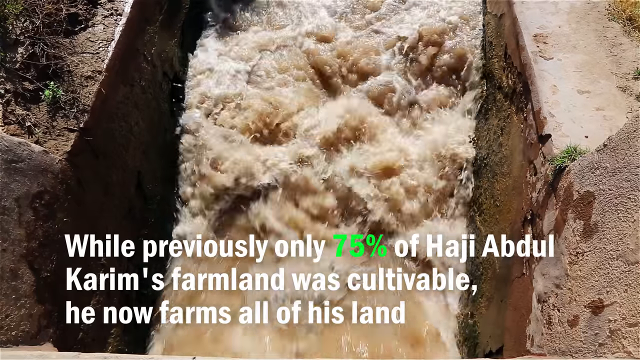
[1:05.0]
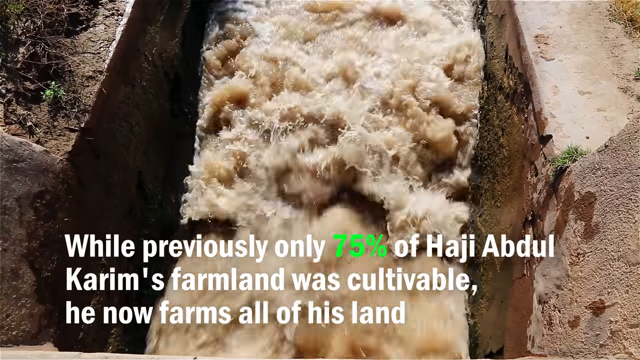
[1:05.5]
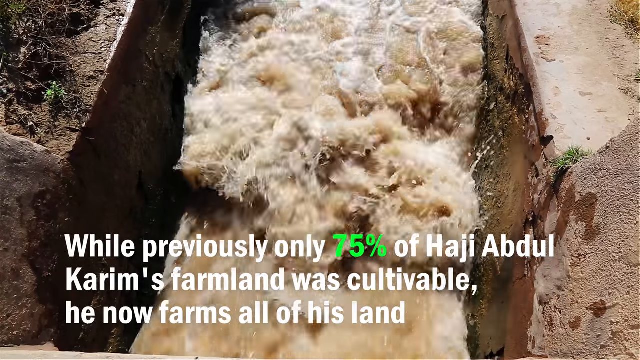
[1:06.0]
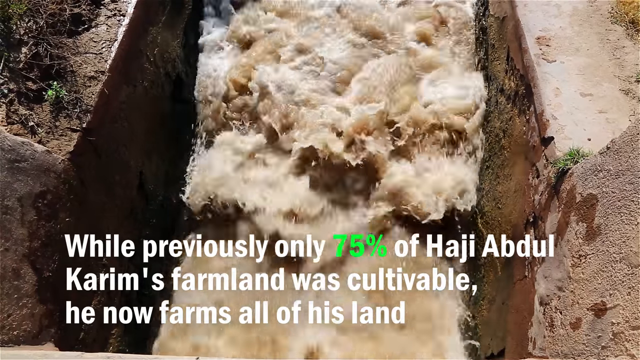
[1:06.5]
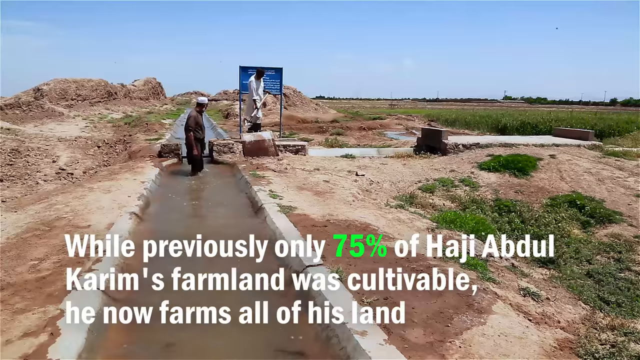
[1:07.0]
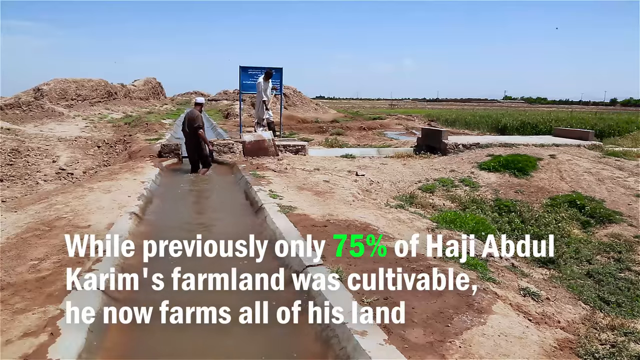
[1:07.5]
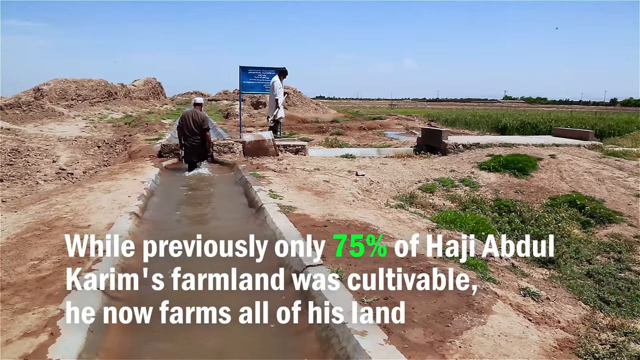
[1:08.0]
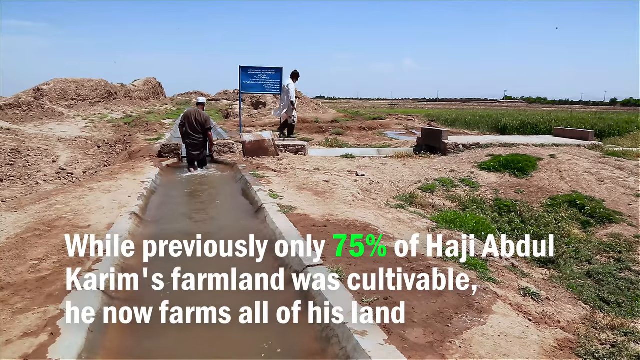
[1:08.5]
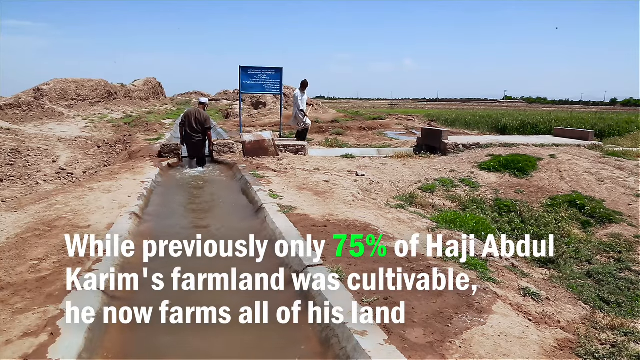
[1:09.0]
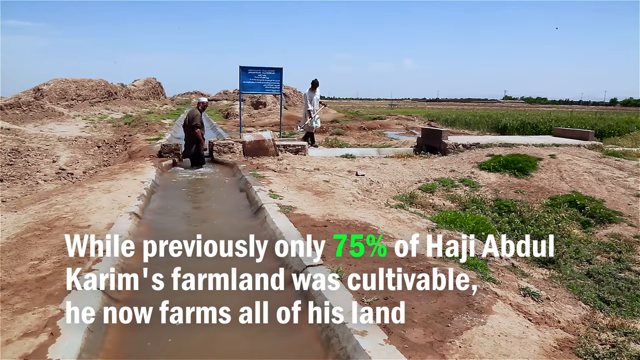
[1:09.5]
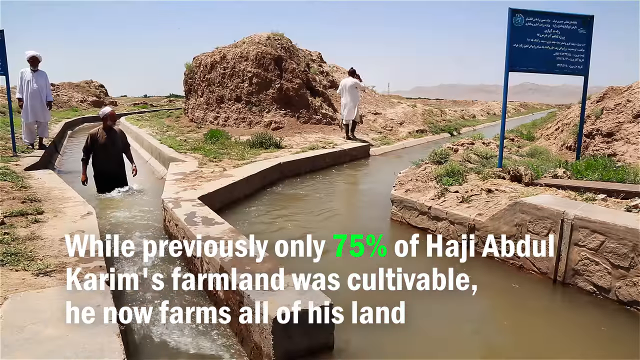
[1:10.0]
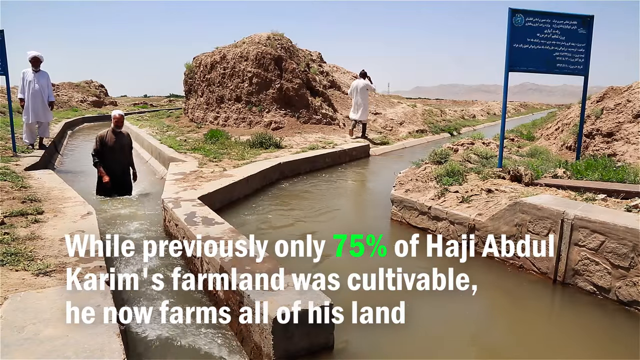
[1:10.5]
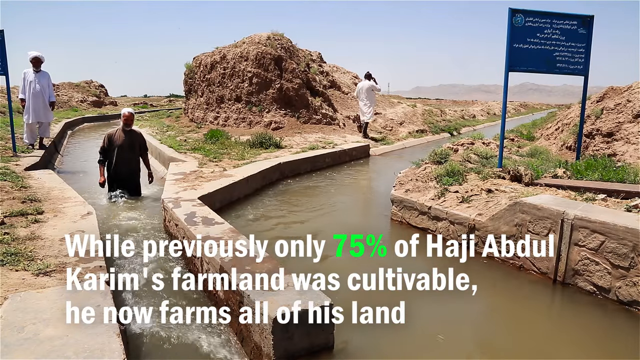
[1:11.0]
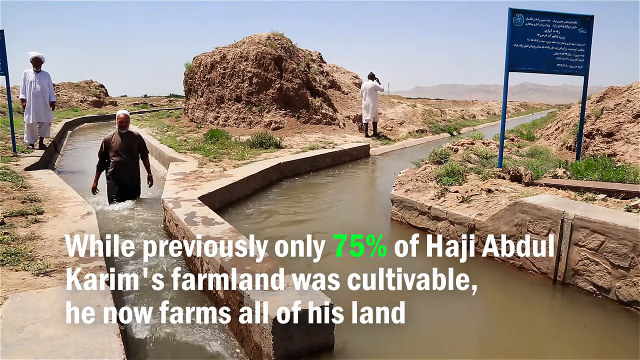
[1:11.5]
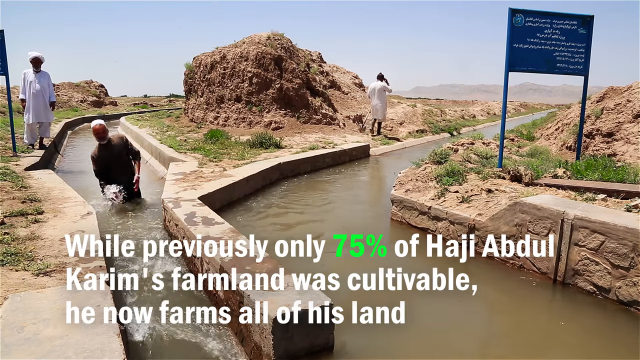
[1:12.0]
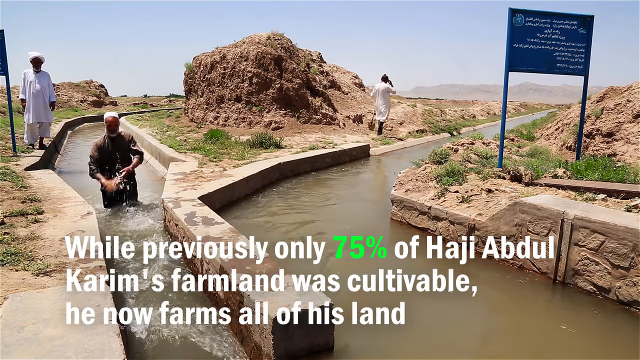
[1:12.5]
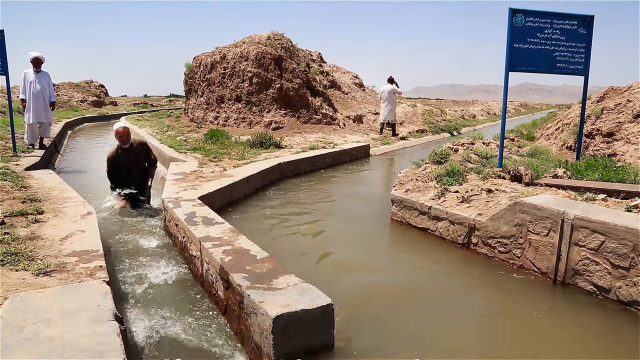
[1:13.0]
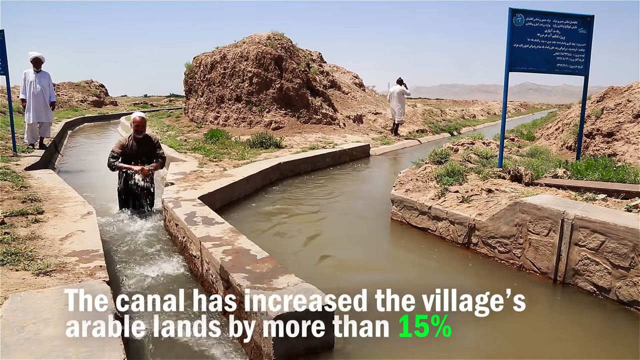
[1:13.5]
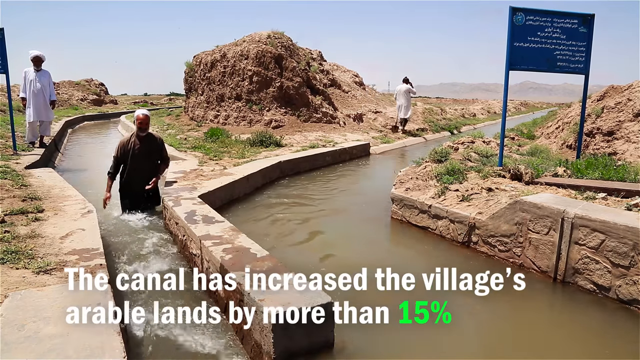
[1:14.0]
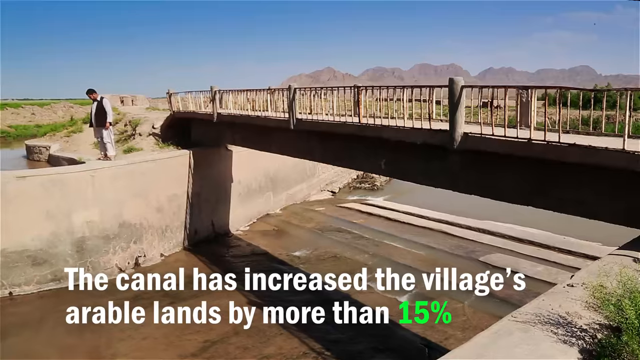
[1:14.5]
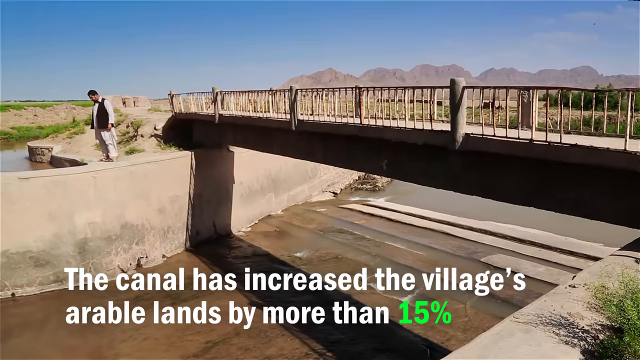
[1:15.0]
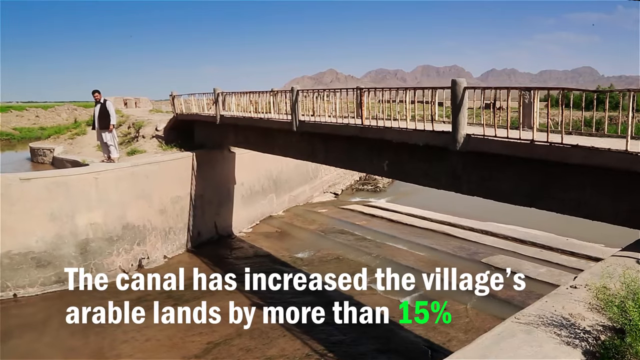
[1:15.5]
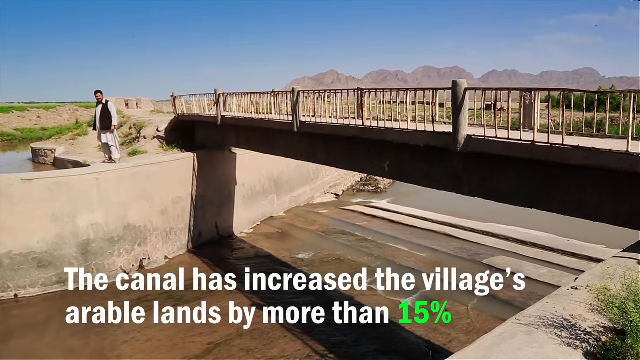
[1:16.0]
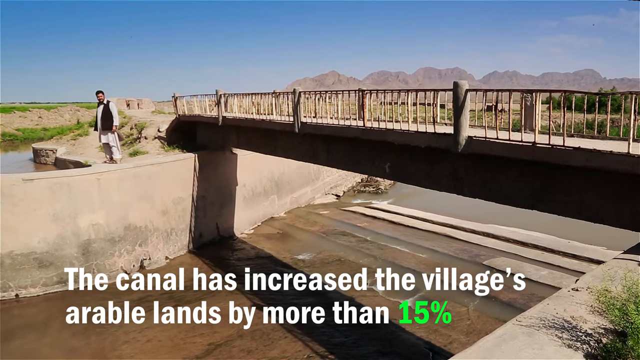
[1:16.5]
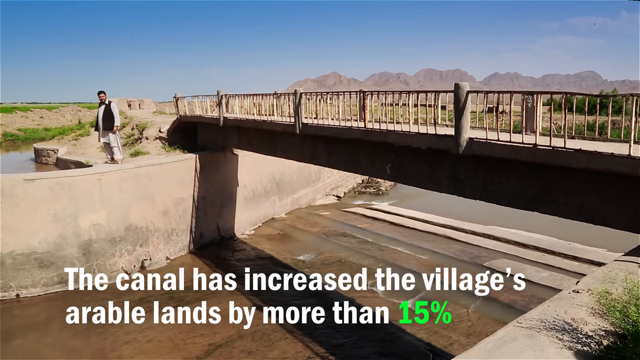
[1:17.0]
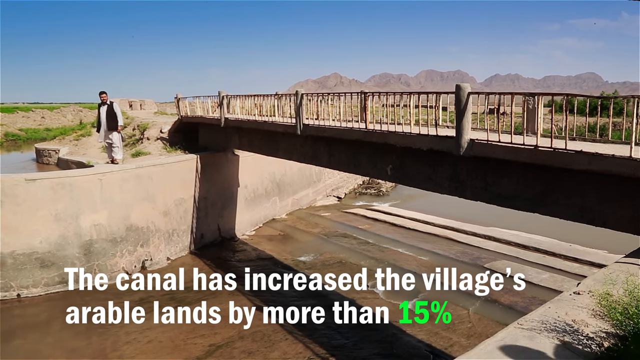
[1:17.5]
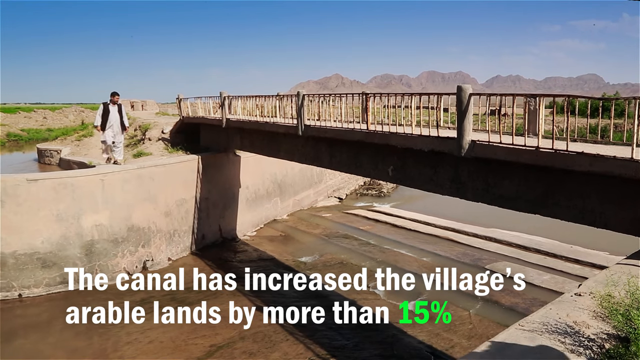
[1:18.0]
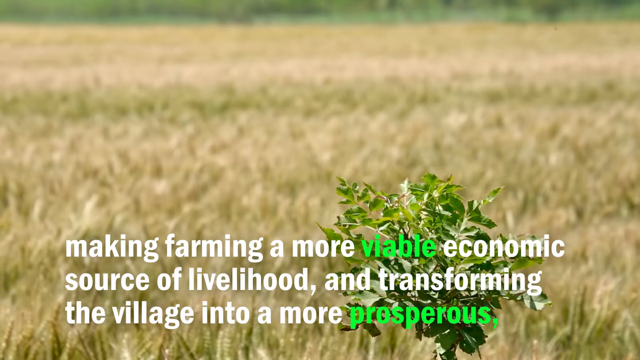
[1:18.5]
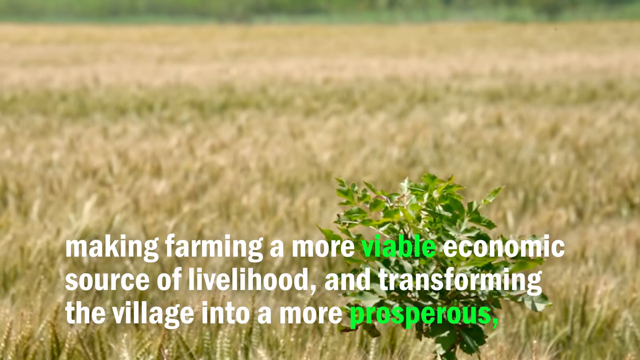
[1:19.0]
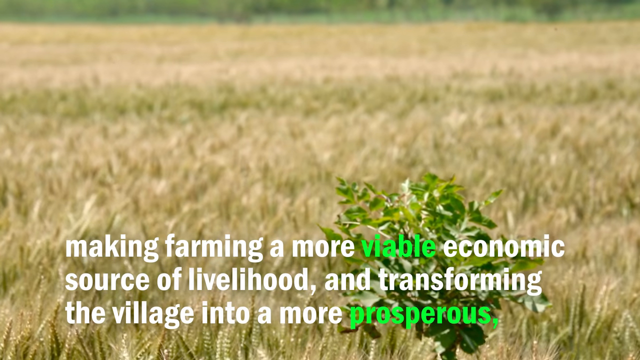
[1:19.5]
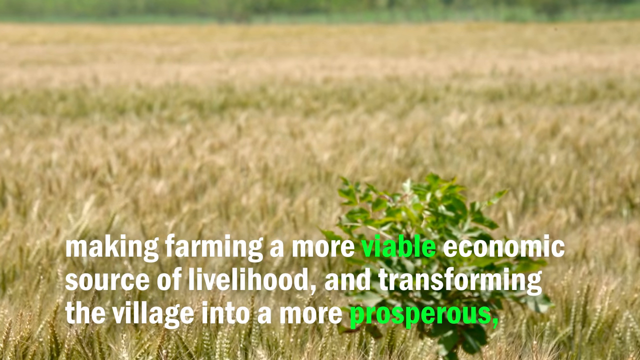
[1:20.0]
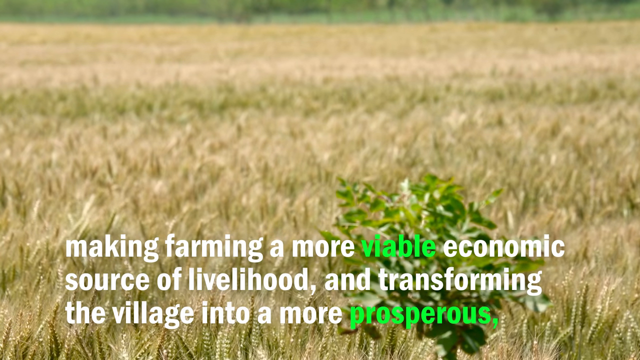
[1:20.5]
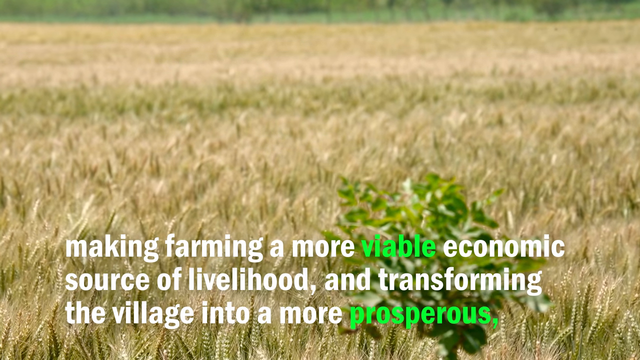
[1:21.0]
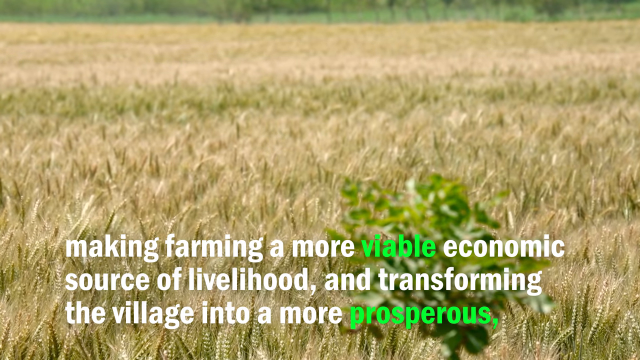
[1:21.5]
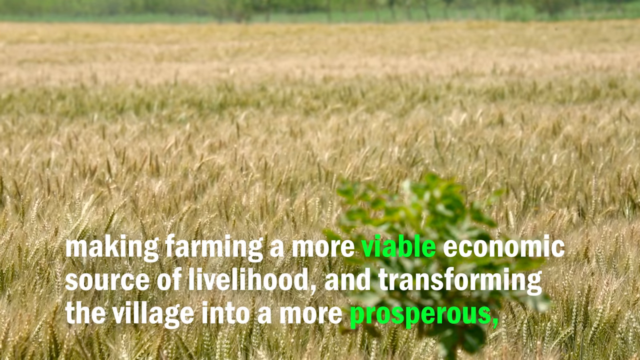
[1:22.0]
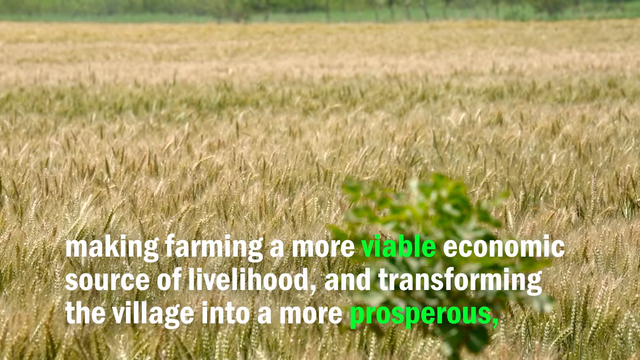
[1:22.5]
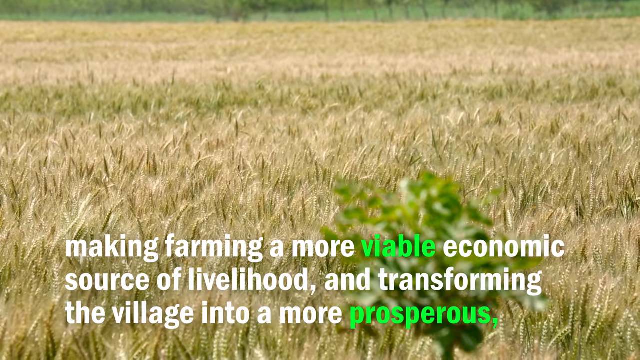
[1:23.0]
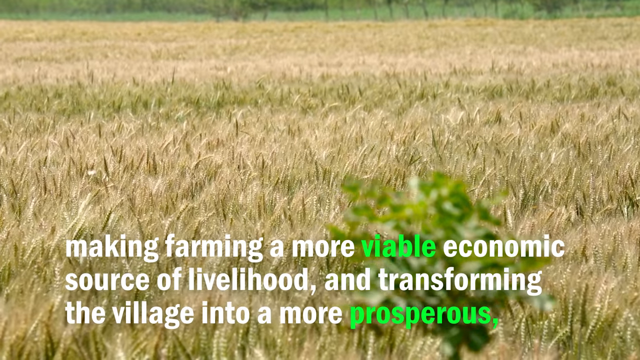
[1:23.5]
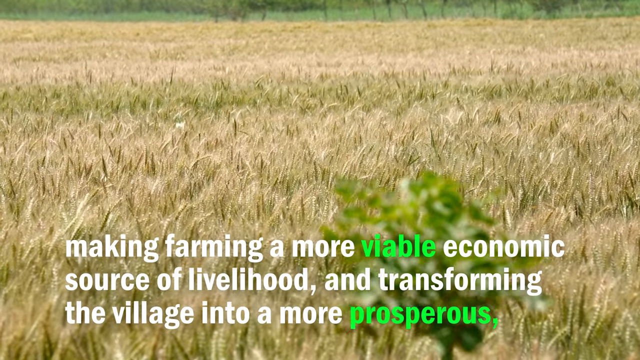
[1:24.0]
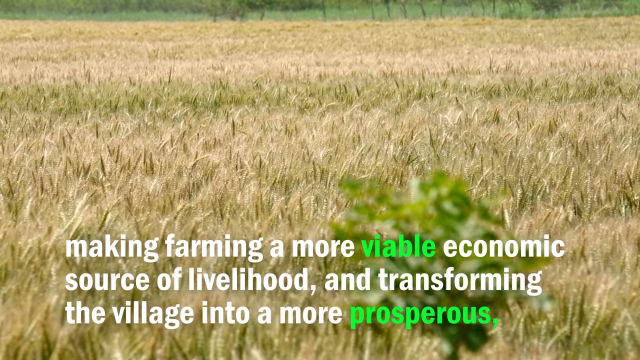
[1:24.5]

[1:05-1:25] The camera switches to a close-up of dirty brown water rushing through the canal, with on-screen text reading "while previously only 75% of Haji Abdul Karim's farmland was cultivable, he now farms all of his land." The camera switches to two men working on the canal: one stands in the water, wading through it, while the other is on the land to the right. There is a blue sky in the background, an arid landscape, and patches of green, and to the right is what looks like farmland with more uniform-looking crops. The camera switches again to one man wading through the canal and two men standing on the banks; the canal looks like it splits in two directions, one on the left and one on the right. A text overlay then falls down, reading "the canal has increased" and continuing about "arable lands by more than 50%."